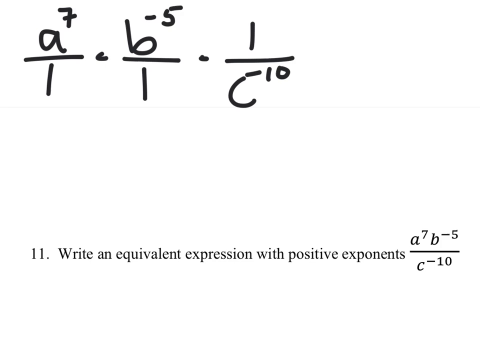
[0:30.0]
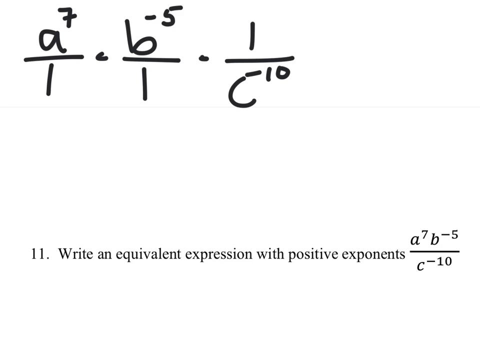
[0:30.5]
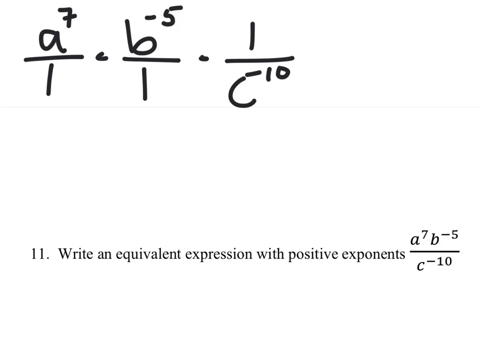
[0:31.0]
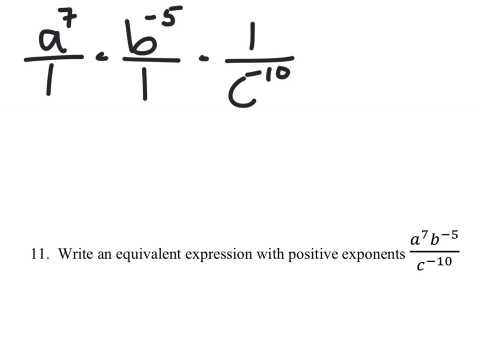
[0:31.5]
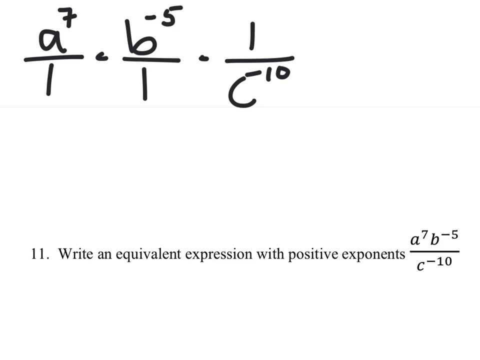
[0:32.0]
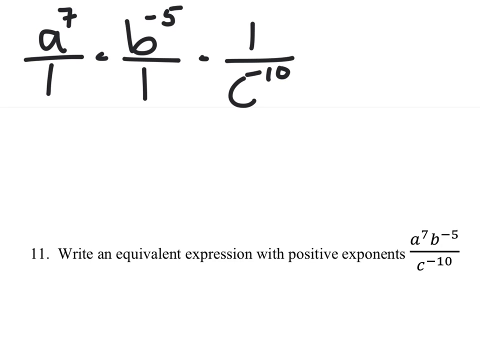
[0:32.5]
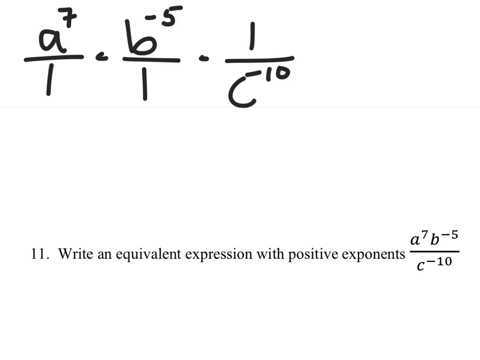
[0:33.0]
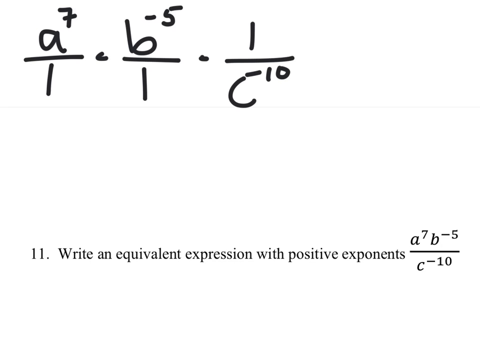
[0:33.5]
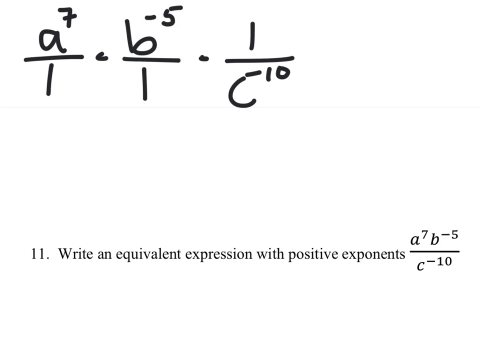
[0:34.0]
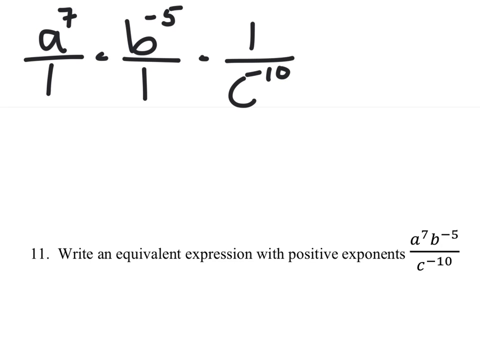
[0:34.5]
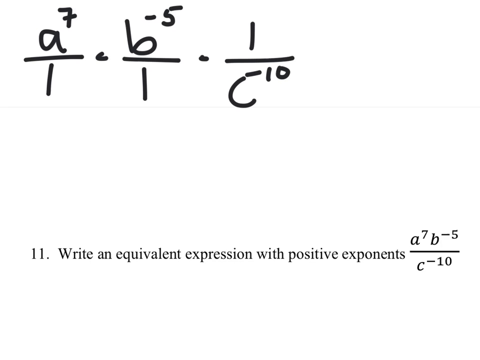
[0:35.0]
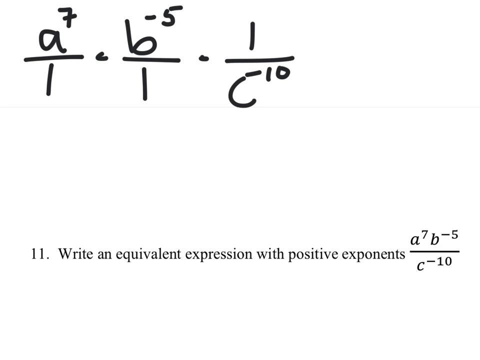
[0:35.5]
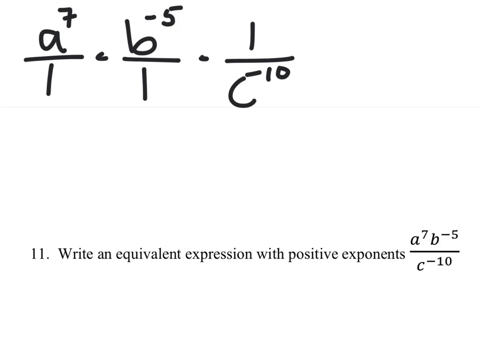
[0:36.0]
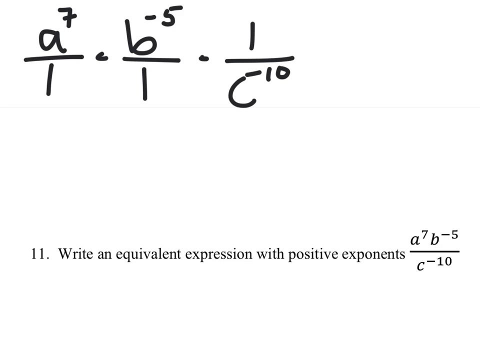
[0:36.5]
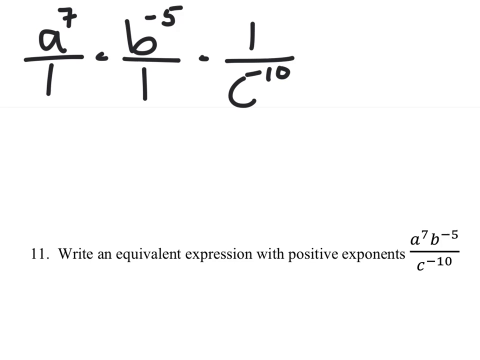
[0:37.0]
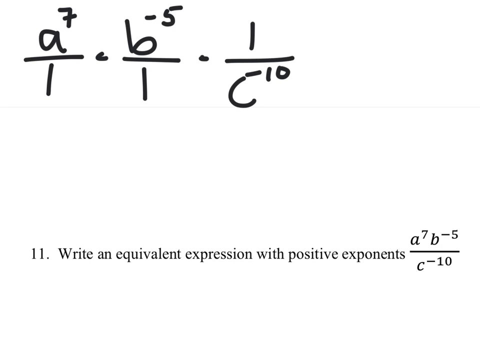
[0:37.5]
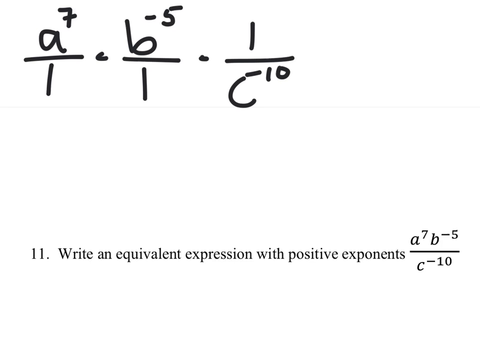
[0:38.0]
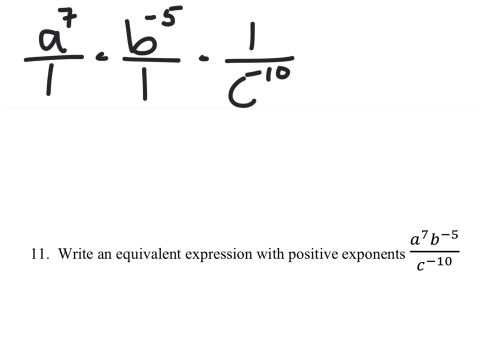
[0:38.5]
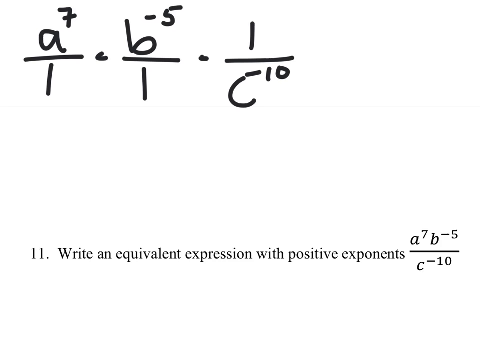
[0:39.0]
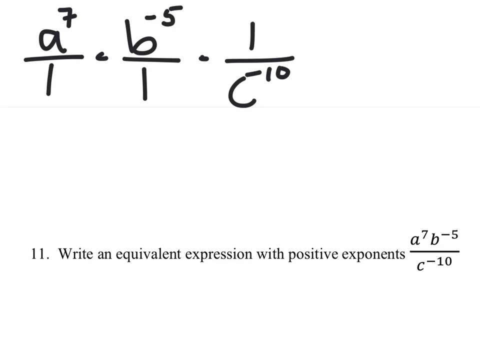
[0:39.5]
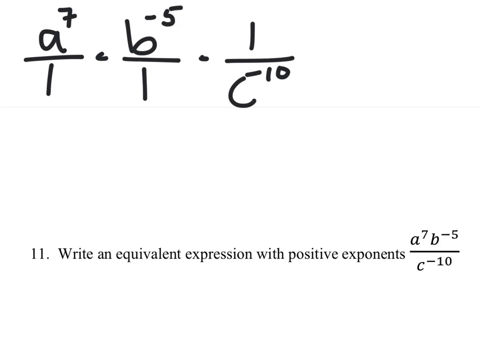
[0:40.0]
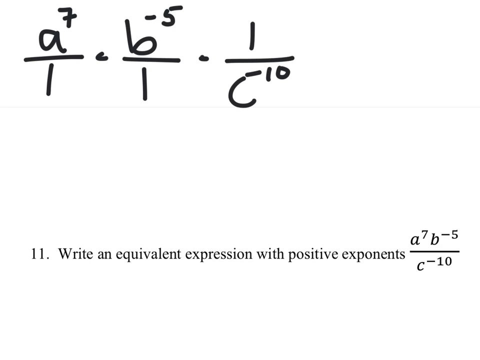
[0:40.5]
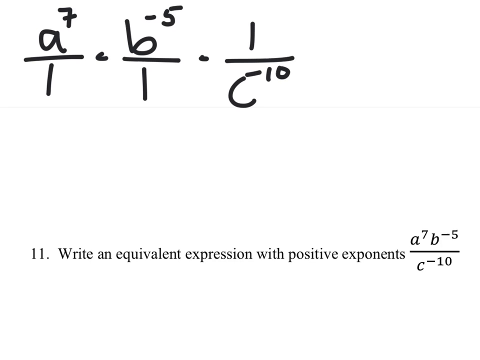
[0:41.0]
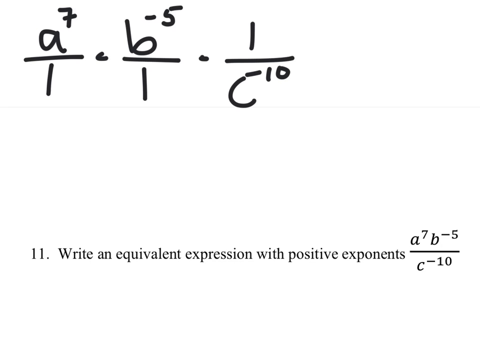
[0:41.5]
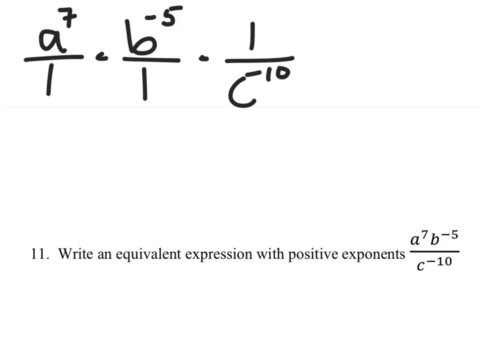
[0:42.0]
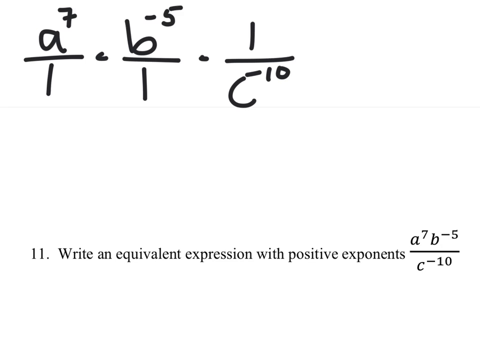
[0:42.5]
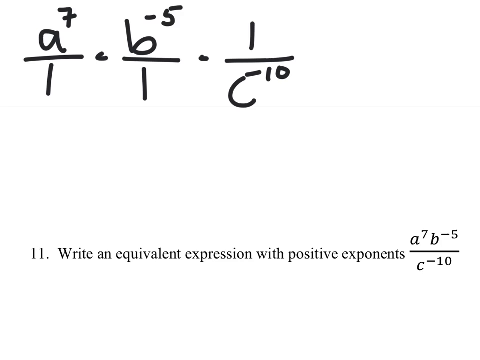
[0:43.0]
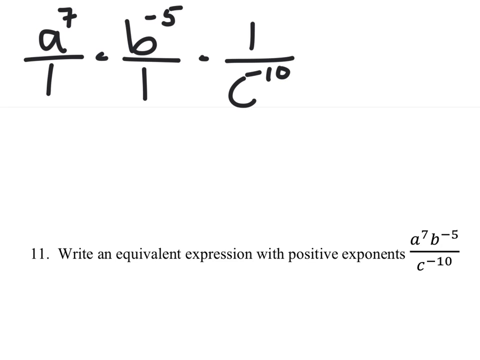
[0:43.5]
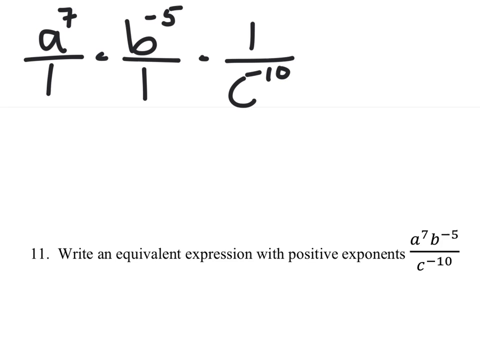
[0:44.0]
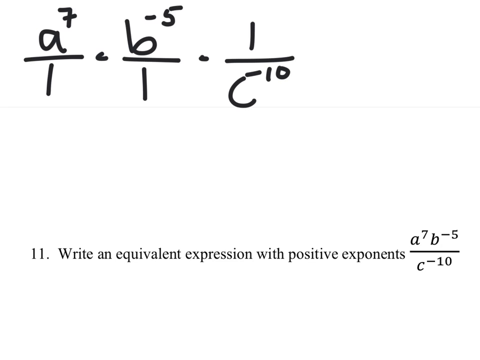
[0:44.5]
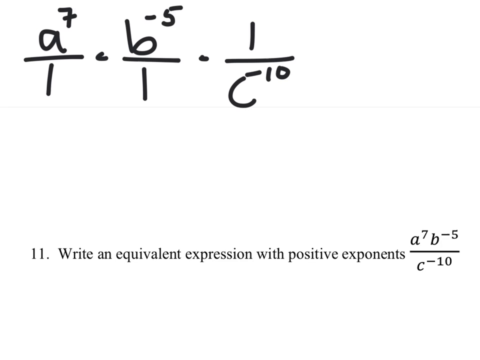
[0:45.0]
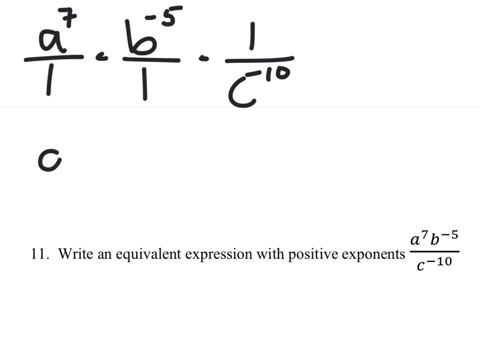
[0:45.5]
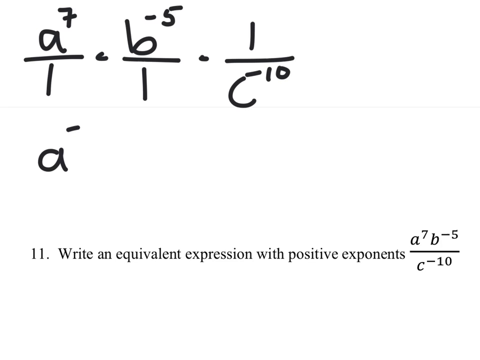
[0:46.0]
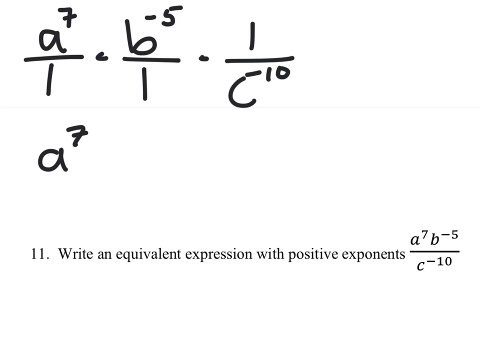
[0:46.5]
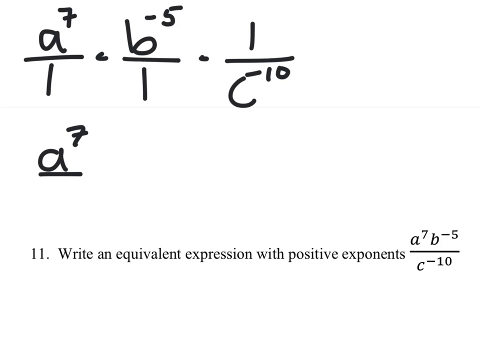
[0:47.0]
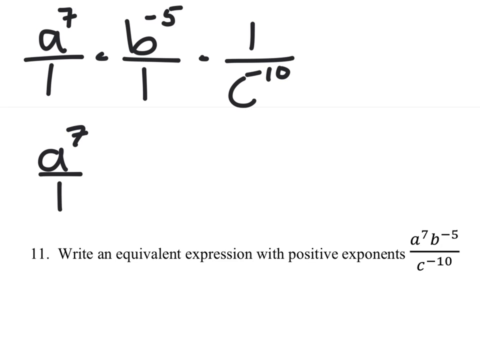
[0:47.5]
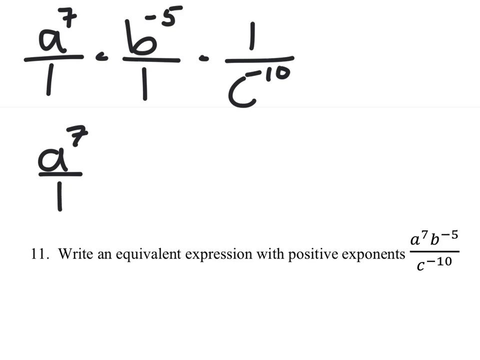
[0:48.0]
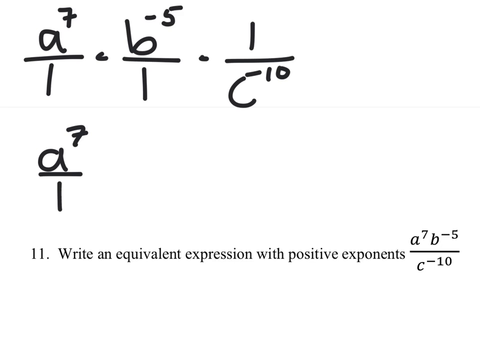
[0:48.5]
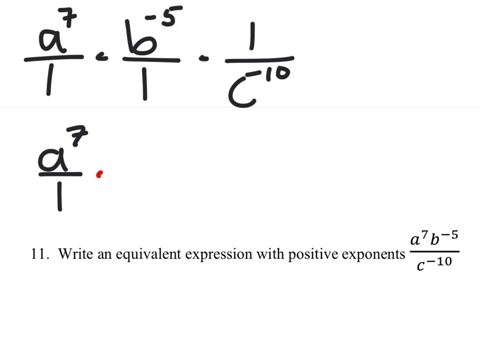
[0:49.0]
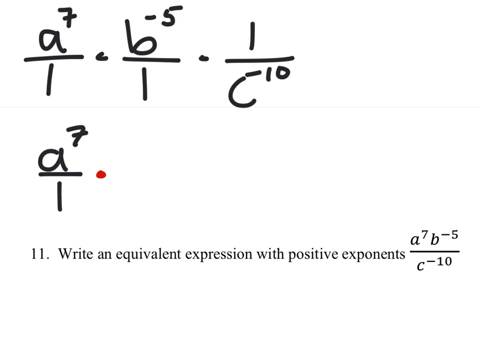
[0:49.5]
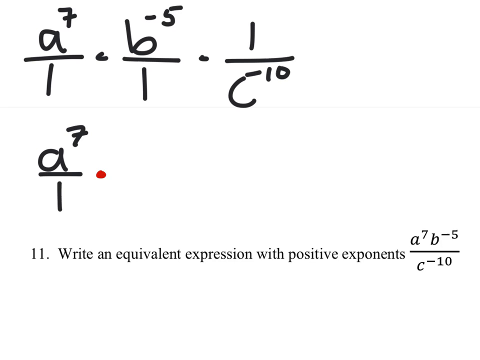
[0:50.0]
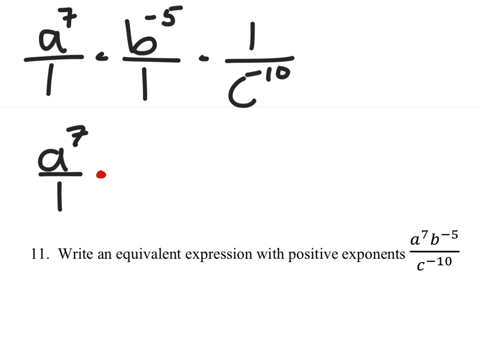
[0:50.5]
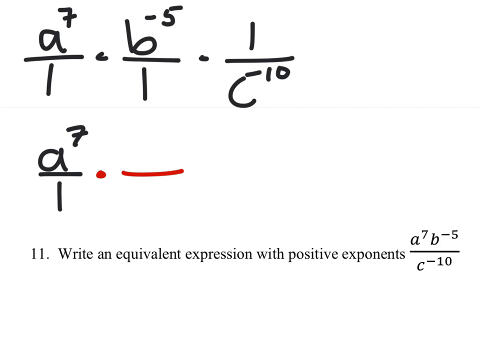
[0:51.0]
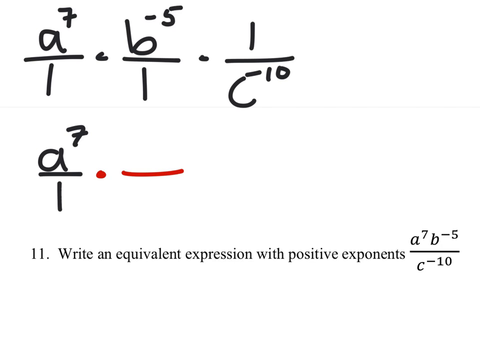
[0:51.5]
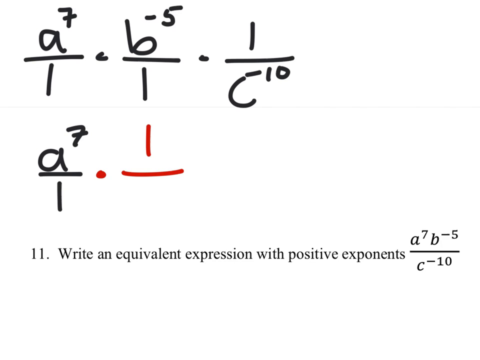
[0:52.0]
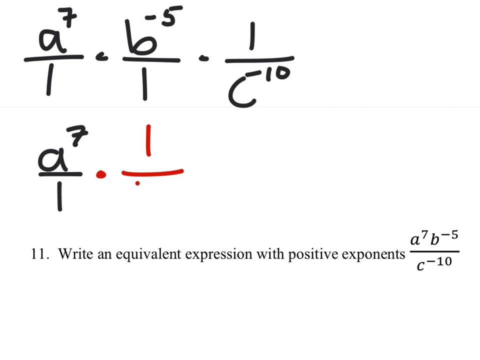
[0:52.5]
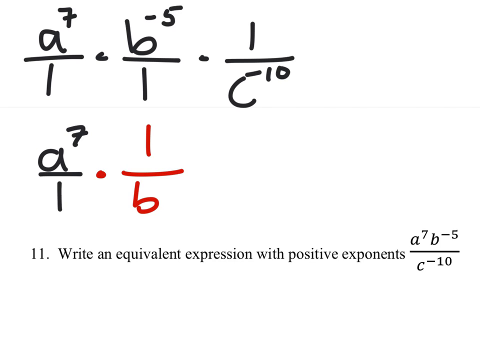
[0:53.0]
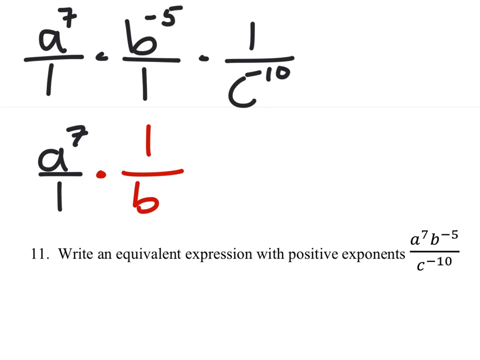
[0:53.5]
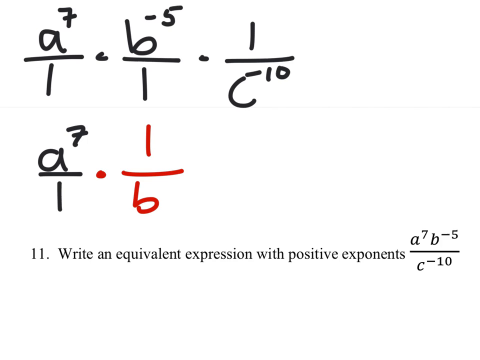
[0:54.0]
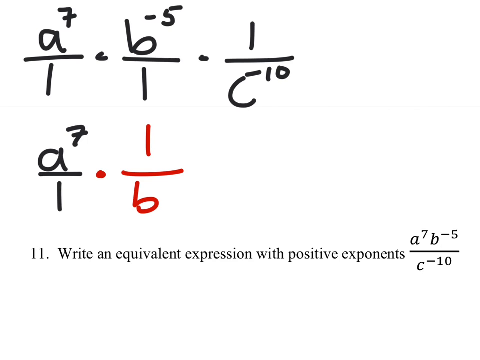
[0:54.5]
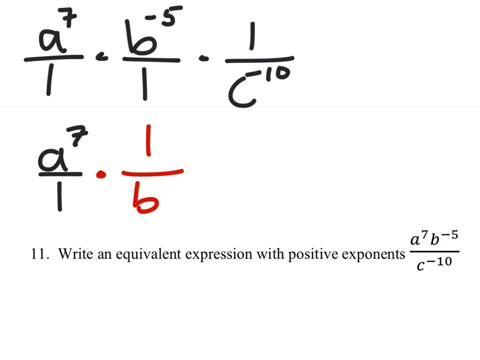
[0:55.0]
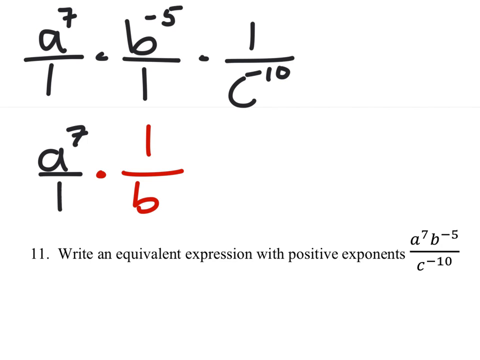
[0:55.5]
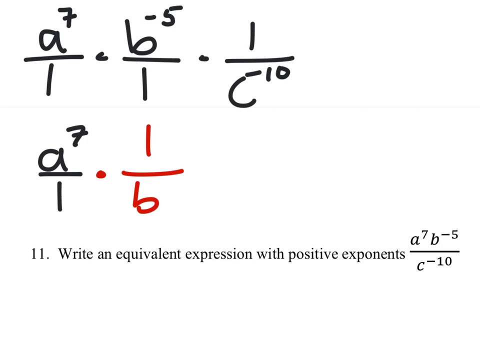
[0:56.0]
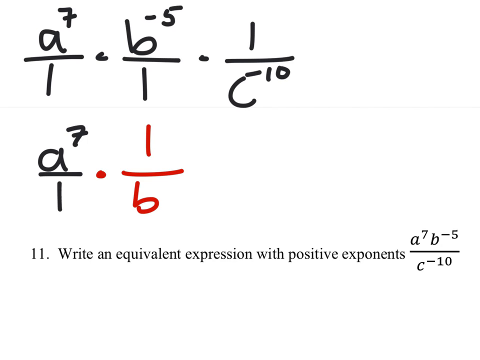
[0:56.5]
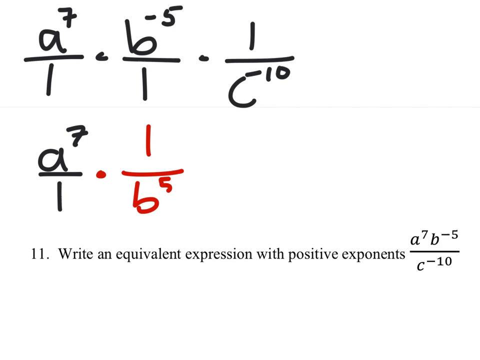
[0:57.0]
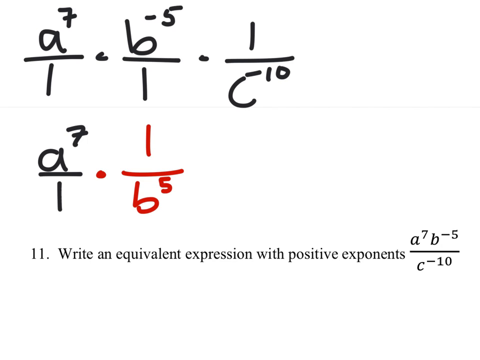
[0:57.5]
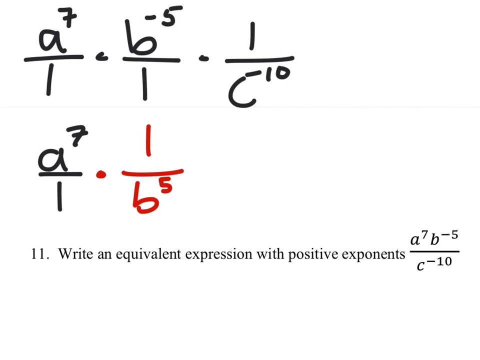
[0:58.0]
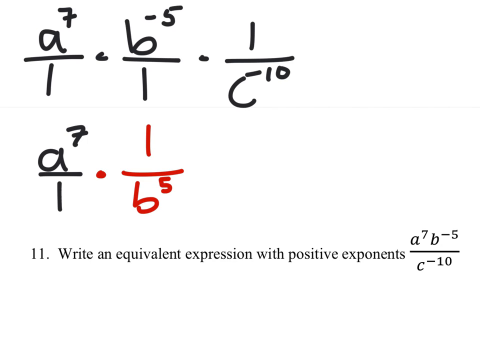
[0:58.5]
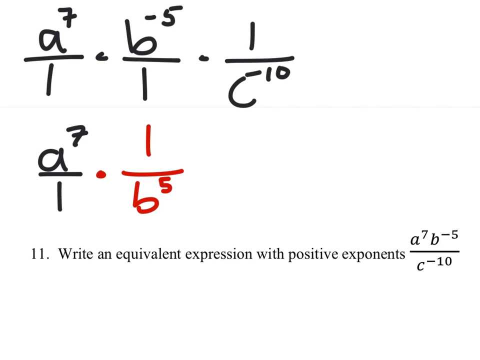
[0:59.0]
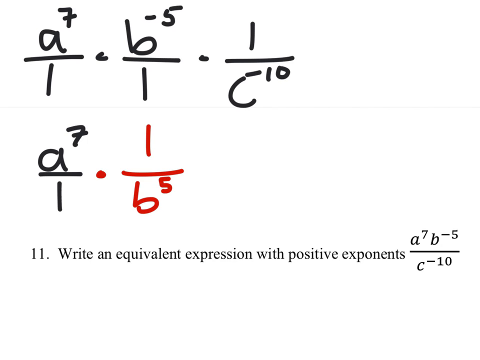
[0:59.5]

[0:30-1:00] The white background holds the written exponents, as if the person is about to calculate from what they have written. More writing appears further down, using both black and red marking pens: a to the exponent 7 divided by 1 is written in black, and 1 divided by b to the exponent 5 is written in red marker. Still no hand appears, only the exponents being written, seemingly by someone teaching these expressions. The background does not change, and the writing moves slowly so that what is being written can be followed.